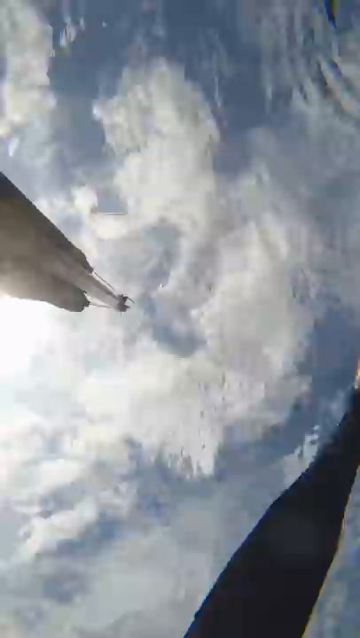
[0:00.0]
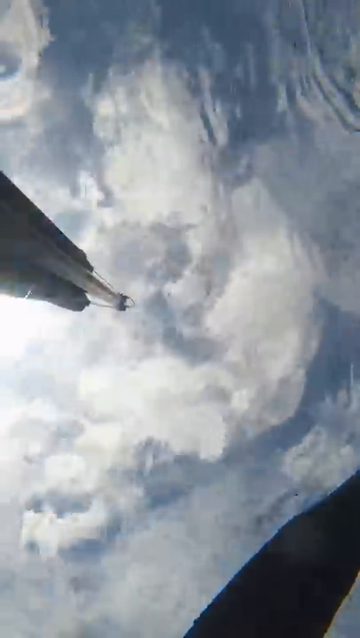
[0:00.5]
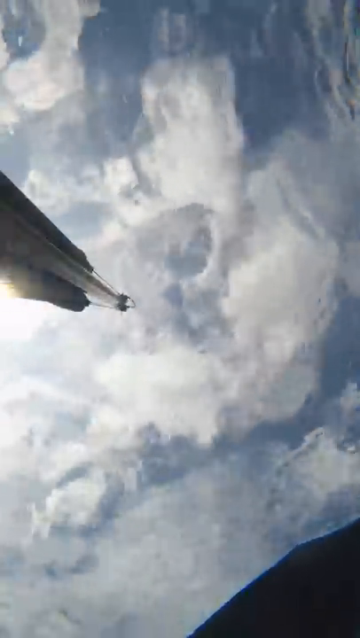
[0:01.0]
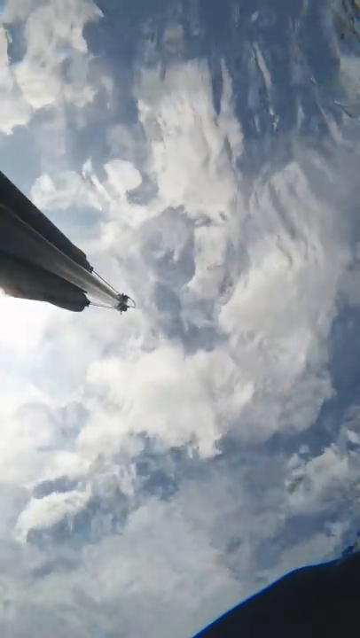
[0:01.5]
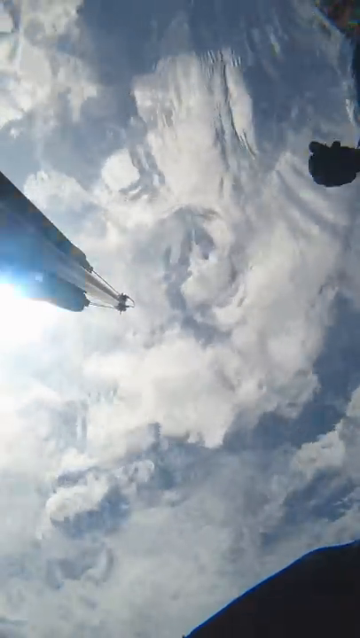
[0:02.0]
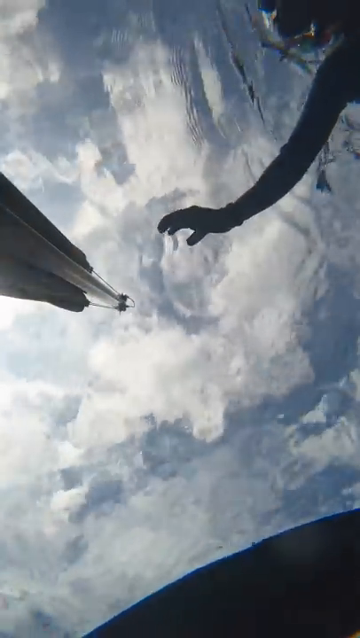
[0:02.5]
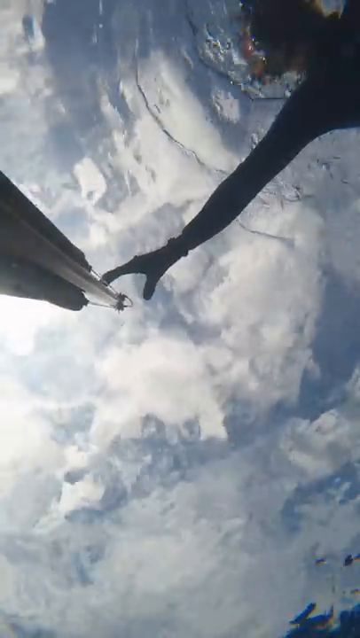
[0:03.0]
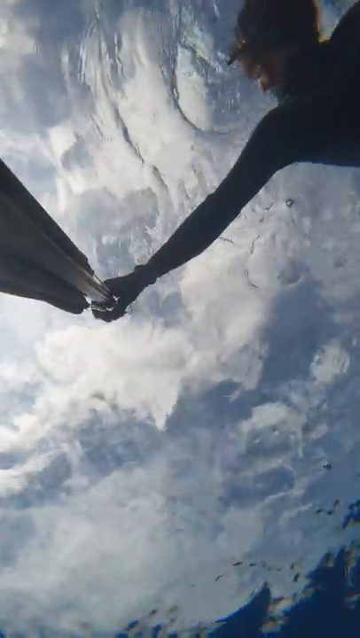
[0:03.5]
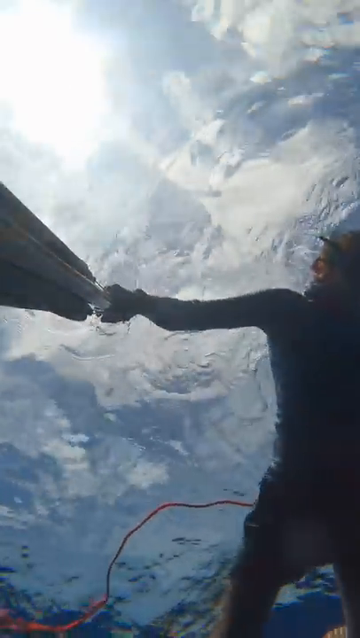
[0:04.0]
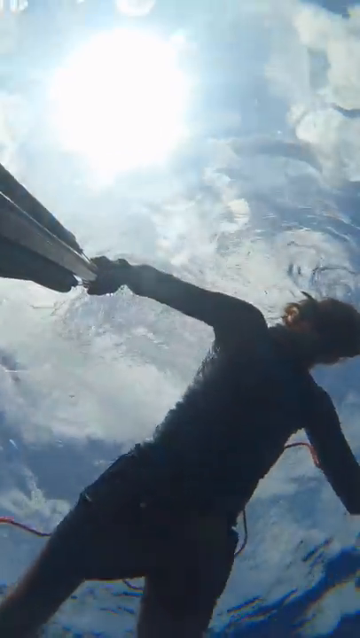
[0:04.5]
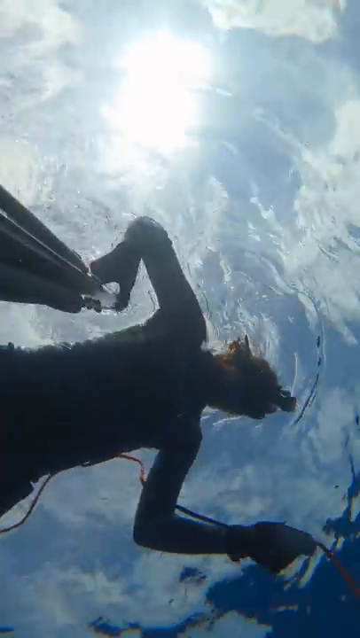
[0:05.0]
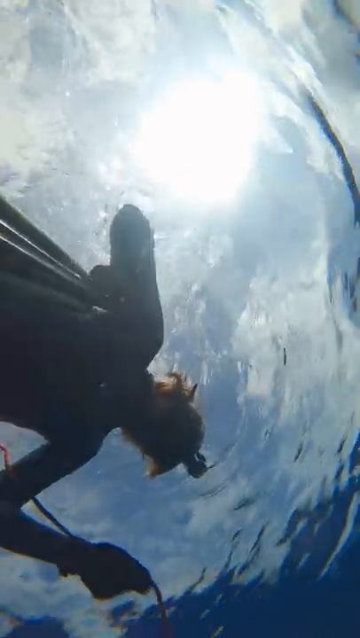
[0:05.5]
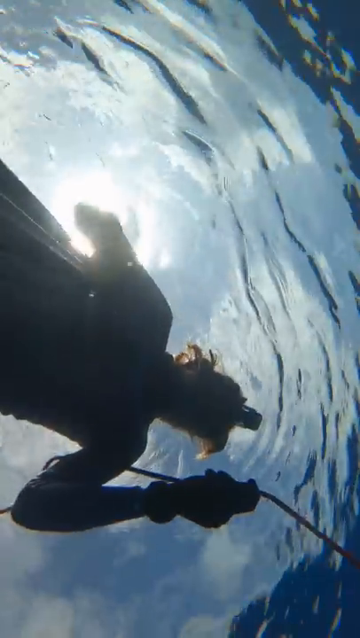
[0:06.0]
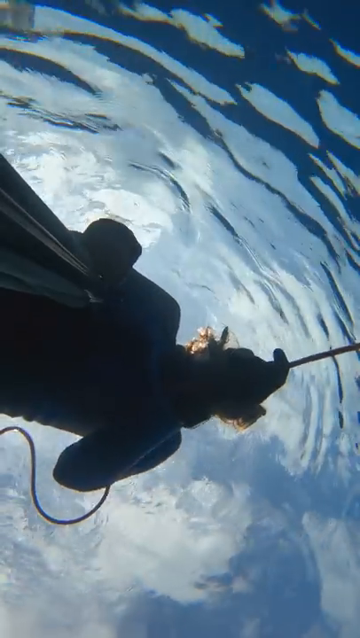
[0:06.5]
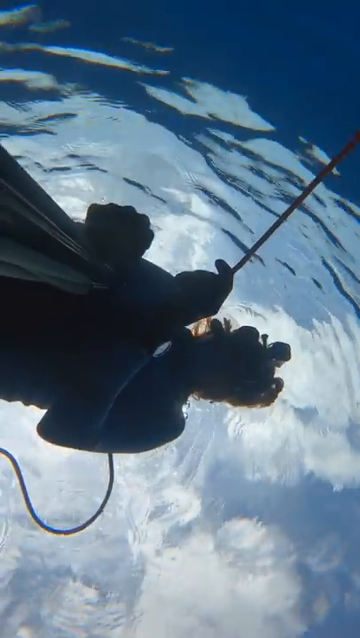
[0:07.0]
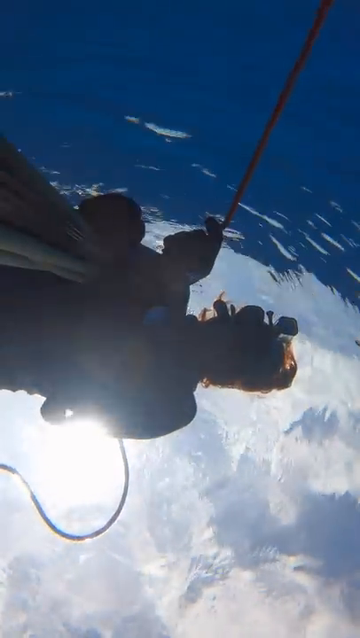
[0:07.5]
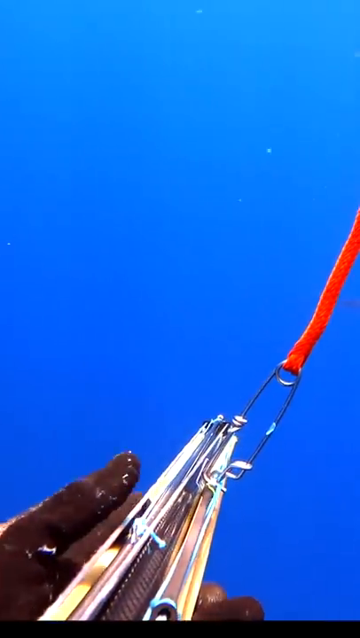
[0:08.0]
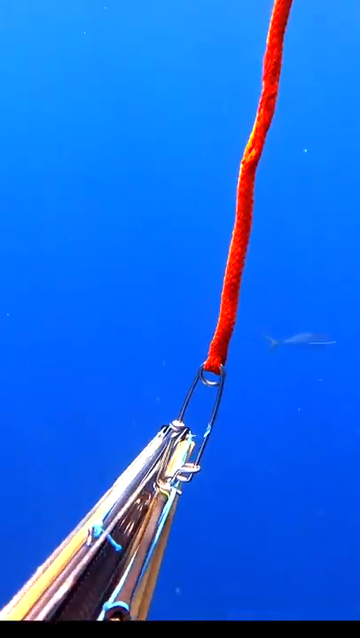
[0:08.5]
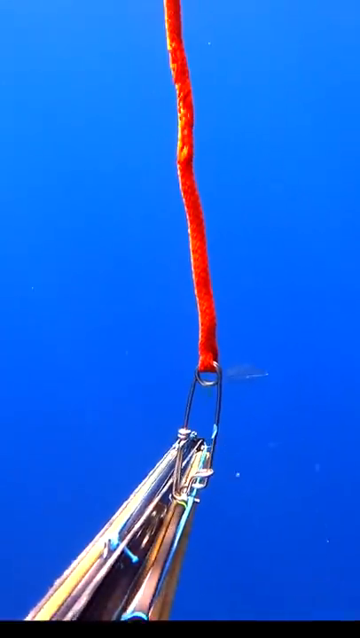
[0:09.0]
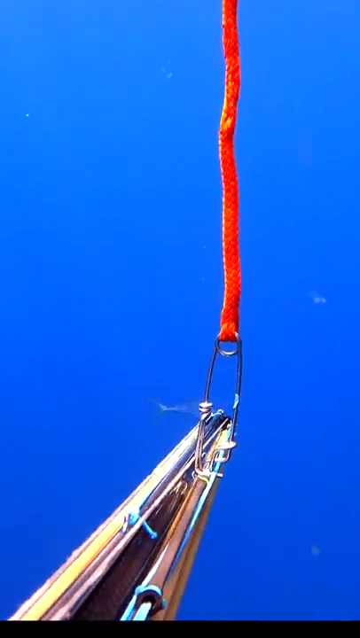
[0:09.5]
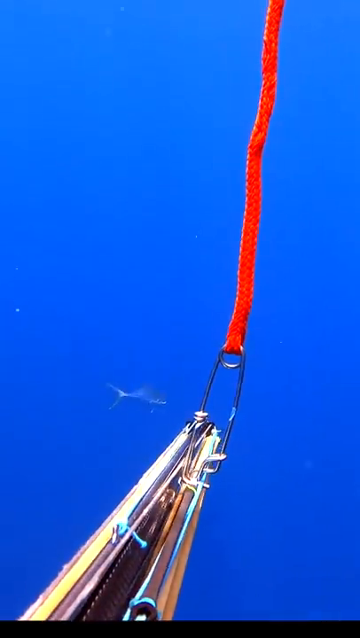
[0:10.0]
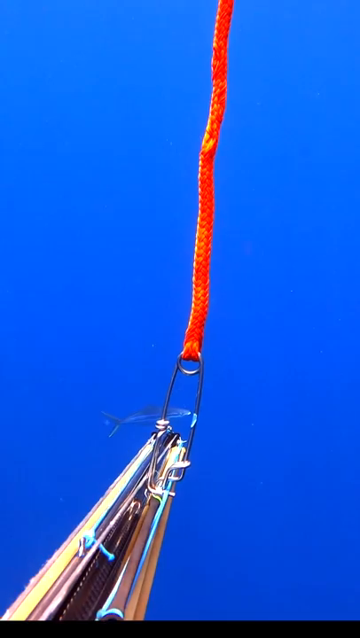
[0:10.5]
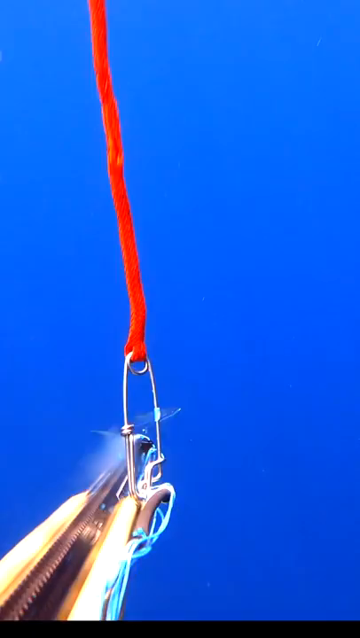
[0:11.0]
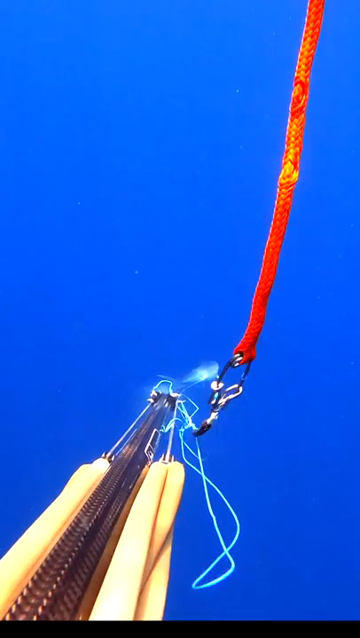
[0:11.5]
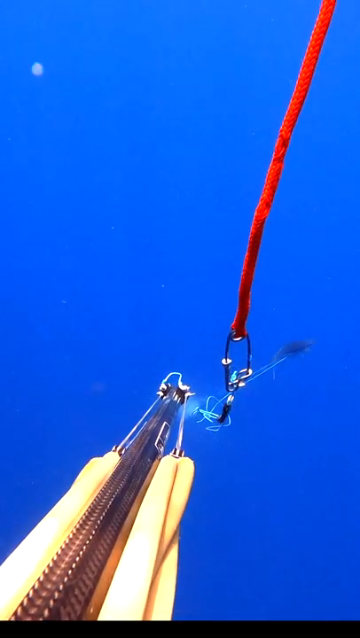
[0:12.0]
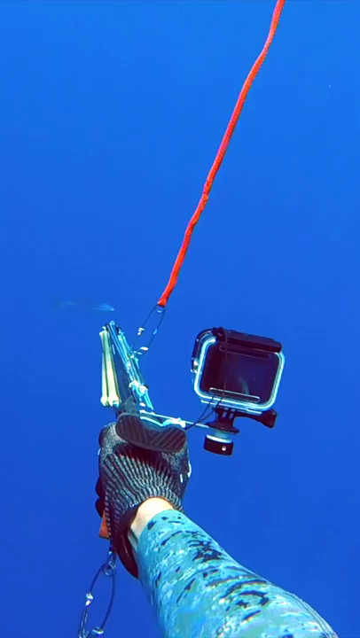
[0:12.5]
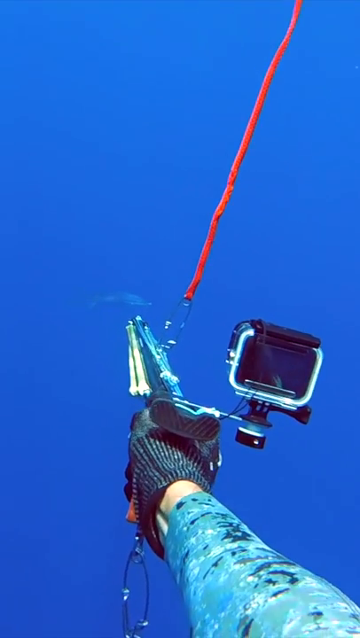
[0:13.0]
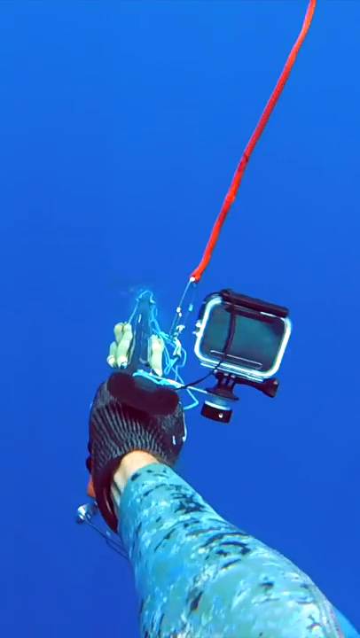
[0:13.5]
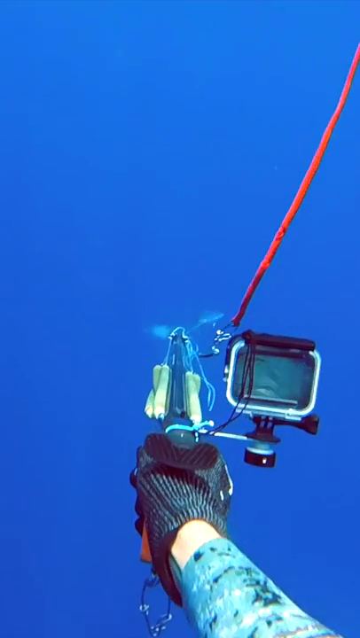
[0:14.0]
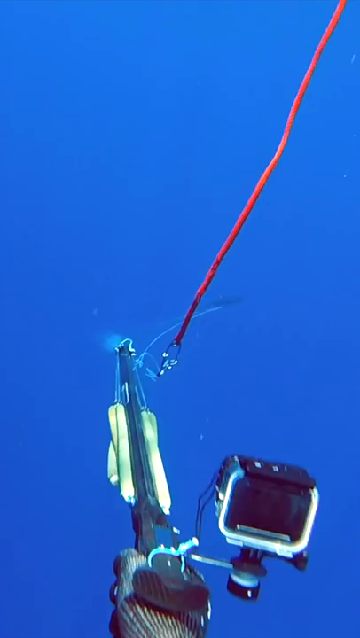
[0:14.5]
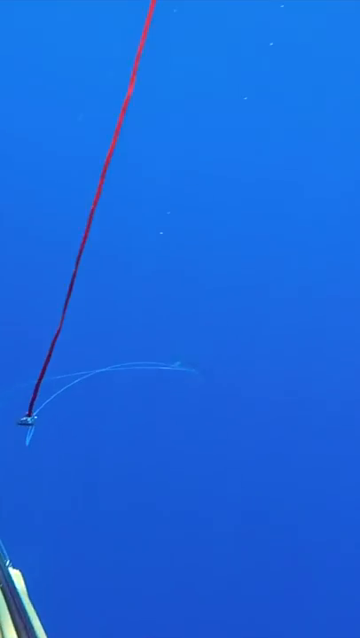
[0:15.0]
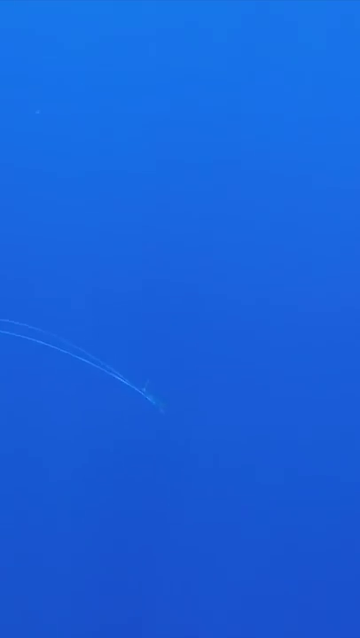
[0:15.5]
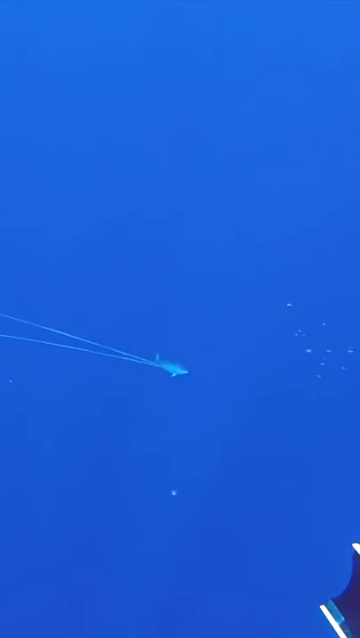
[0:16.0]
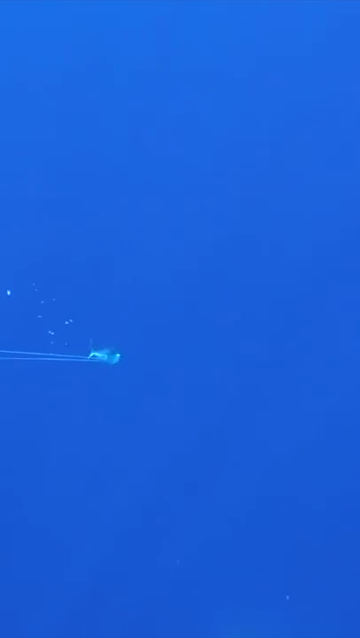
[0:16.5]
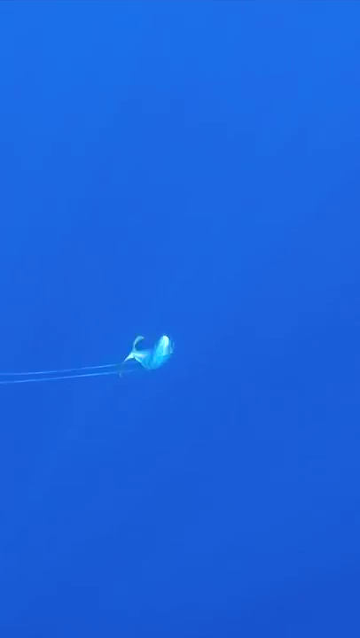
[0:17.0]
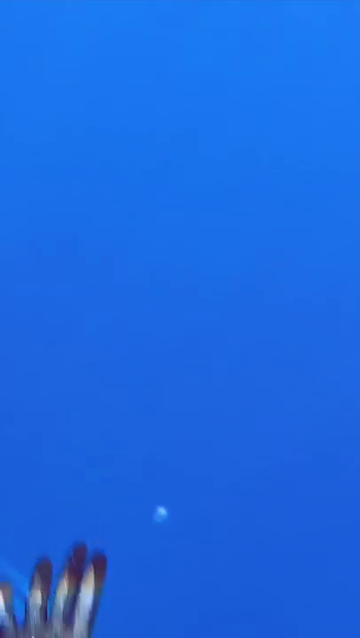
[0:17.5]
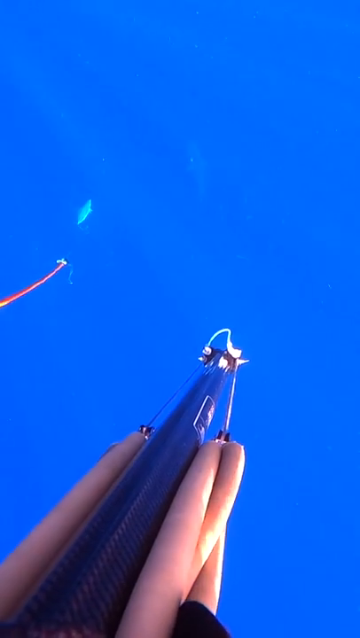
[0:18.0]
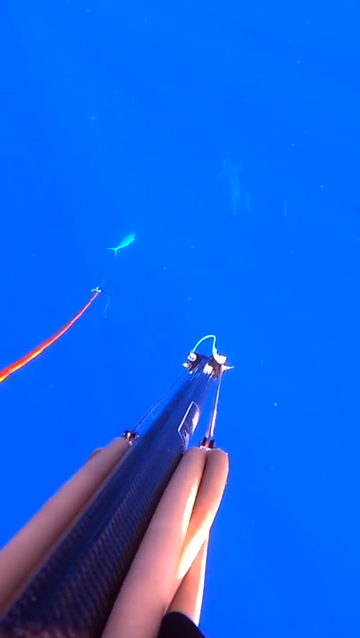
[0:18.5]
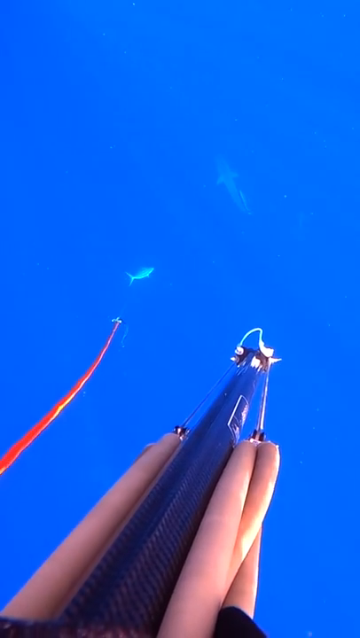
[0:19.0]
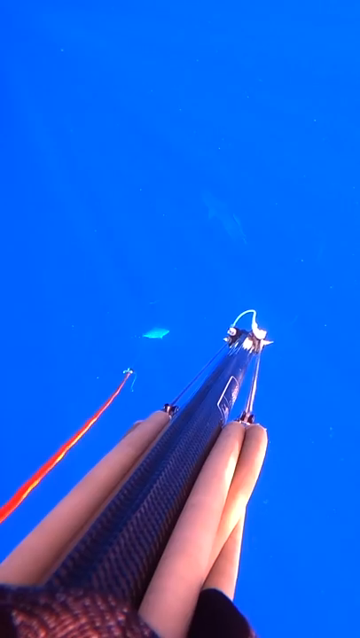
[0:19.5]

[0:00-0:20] The scene may be water, with a person and lots of ripples, and a fish in the distance. It looks like some kind of spear fishing: a weapon shoots out an arrow on a string to pierce the fish. A sort of red cord is attached to the weapon, and the person's arm wears a glove. The string flies through the water and maybe hits the fish. At first the view may be looking up from underneath the water, with maybe clouds visible through it. The type of fish is hard to tell; it might be quite a large fish and is quite far in the distance, but it has been caught, and its fins start flapping much faster after it is speared. The water is a very sort of deep royal blue, and the shots mostly show water, a little bit of the fish, and maybe the person's hand or arm.